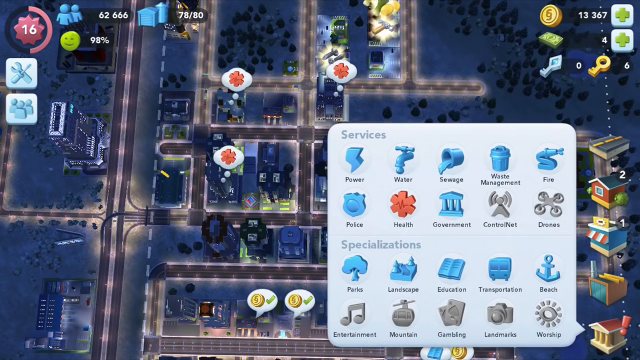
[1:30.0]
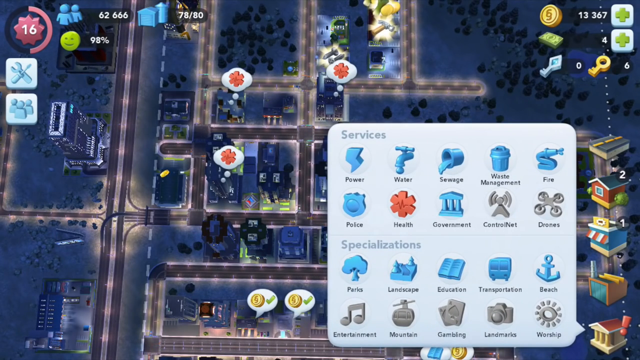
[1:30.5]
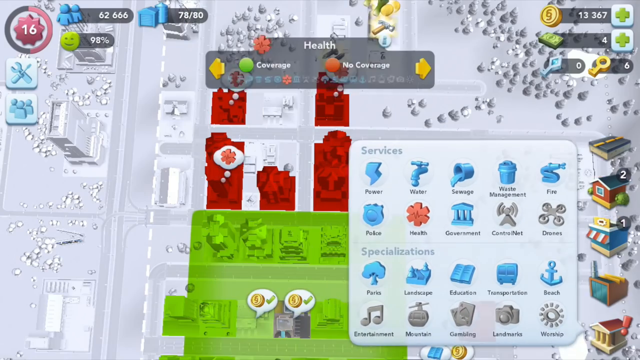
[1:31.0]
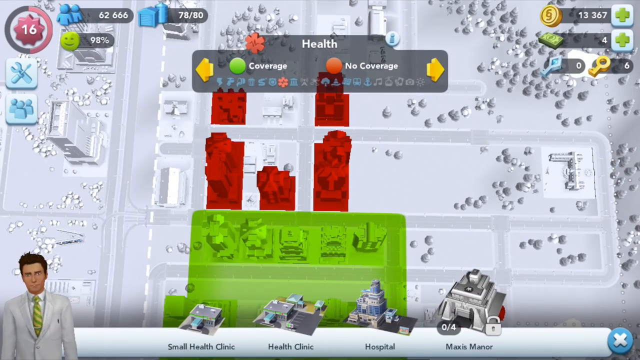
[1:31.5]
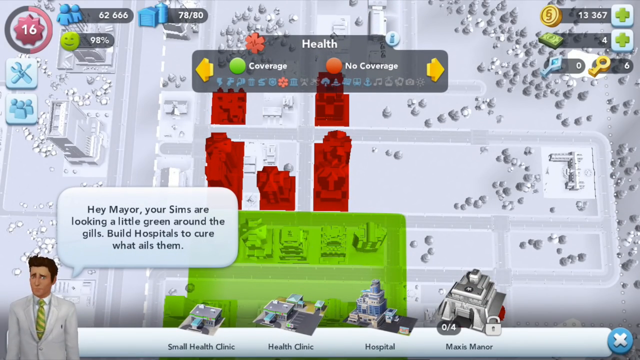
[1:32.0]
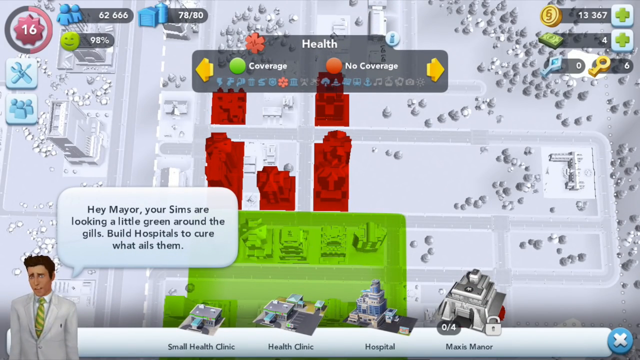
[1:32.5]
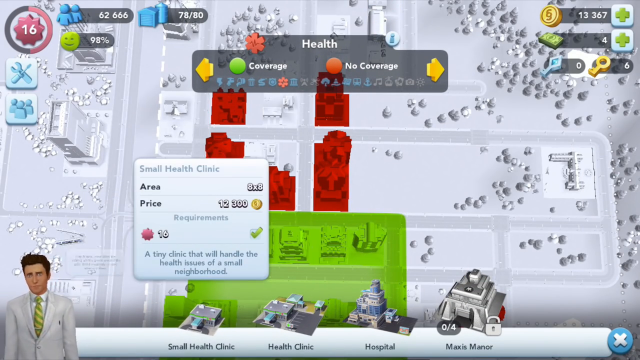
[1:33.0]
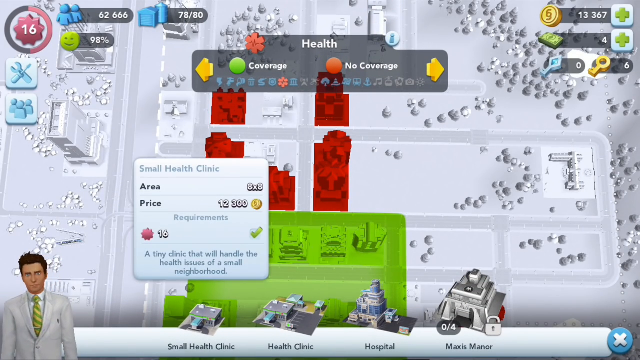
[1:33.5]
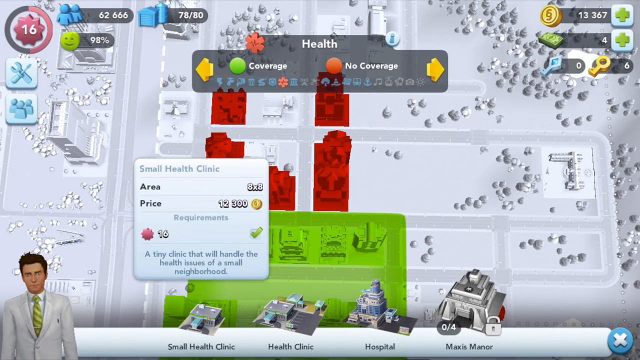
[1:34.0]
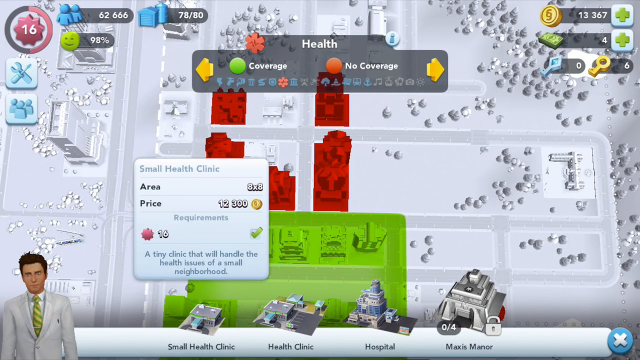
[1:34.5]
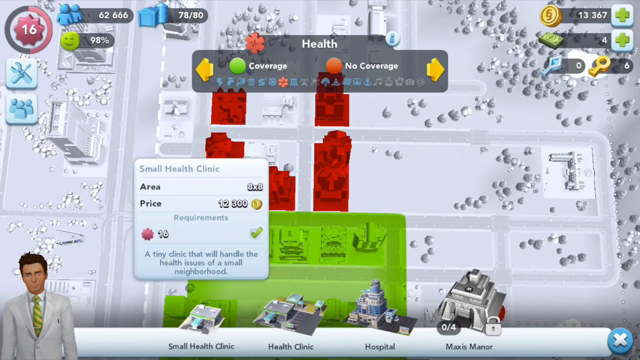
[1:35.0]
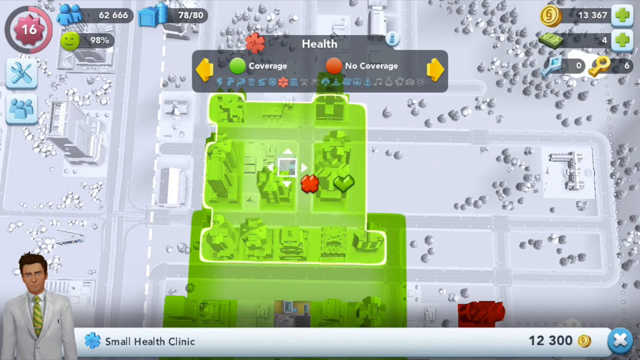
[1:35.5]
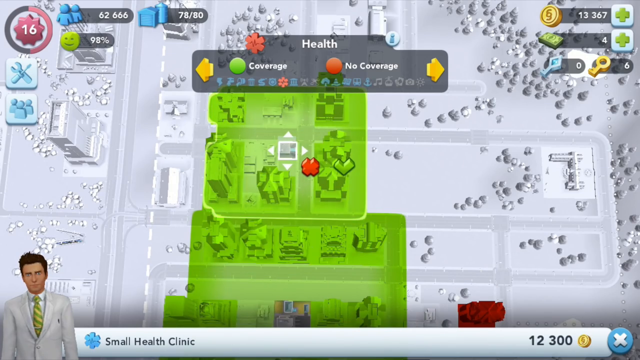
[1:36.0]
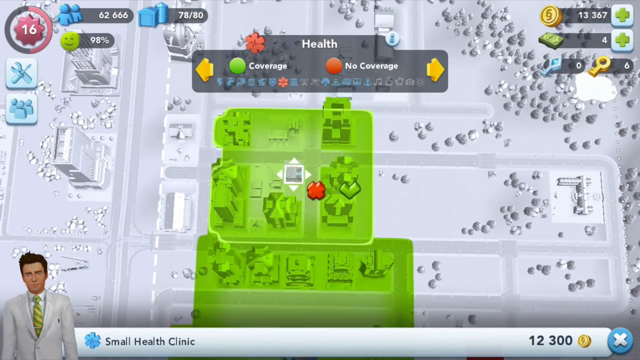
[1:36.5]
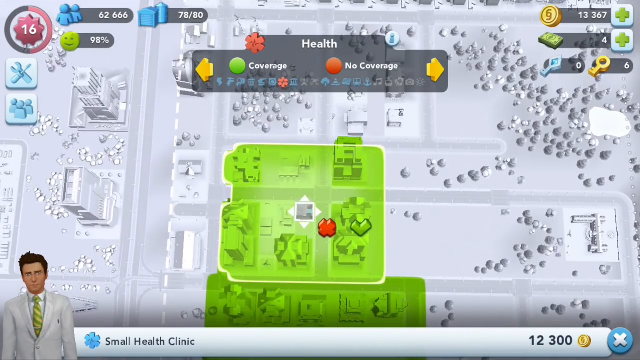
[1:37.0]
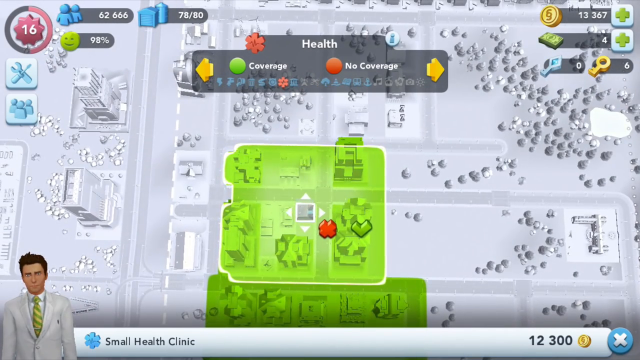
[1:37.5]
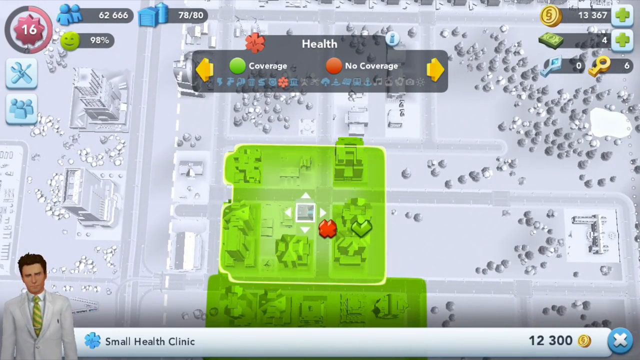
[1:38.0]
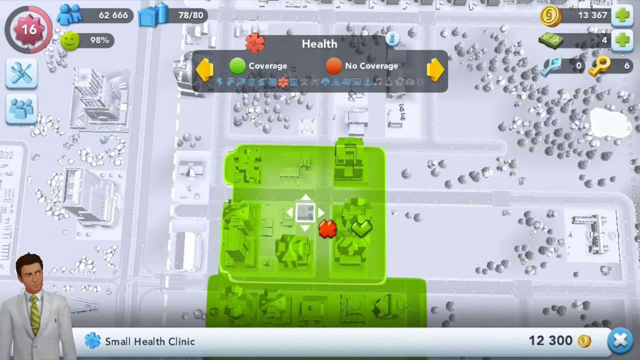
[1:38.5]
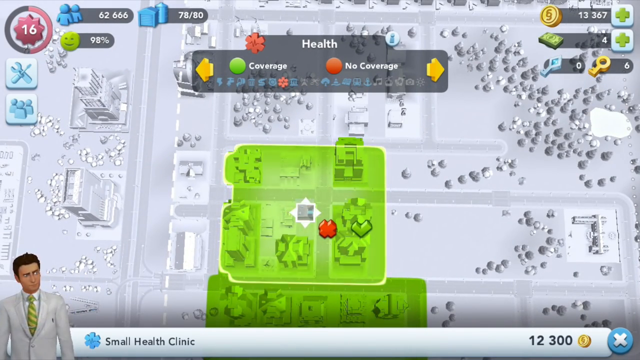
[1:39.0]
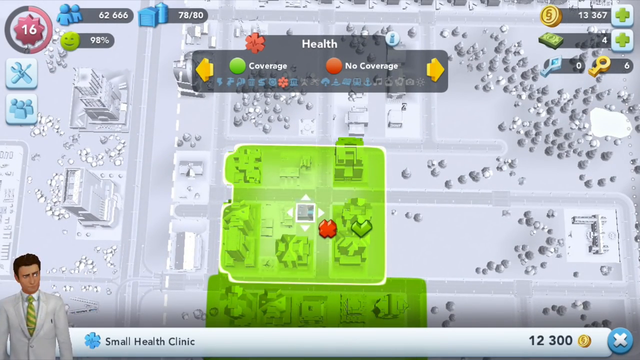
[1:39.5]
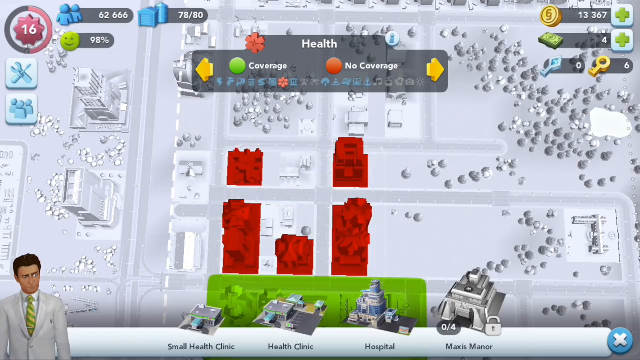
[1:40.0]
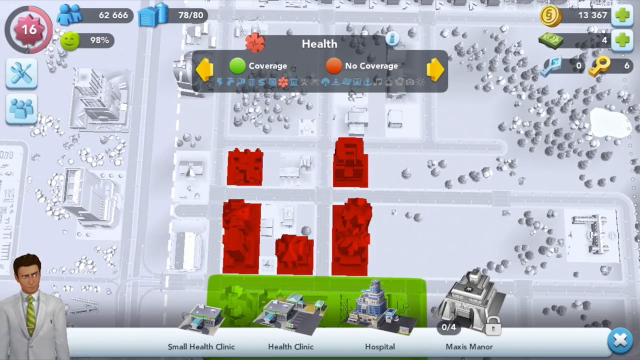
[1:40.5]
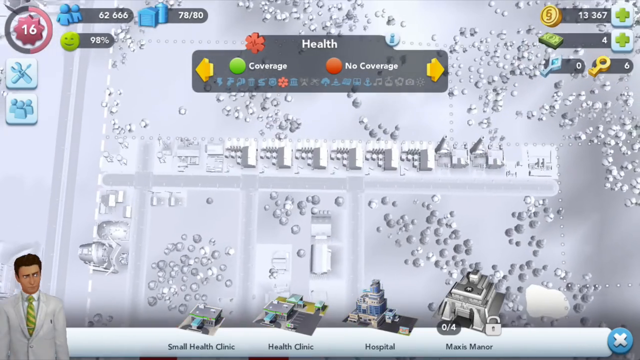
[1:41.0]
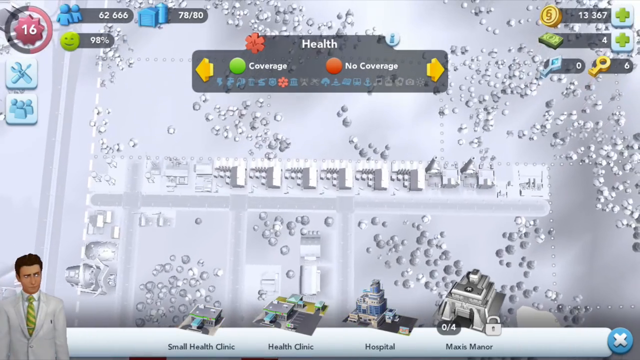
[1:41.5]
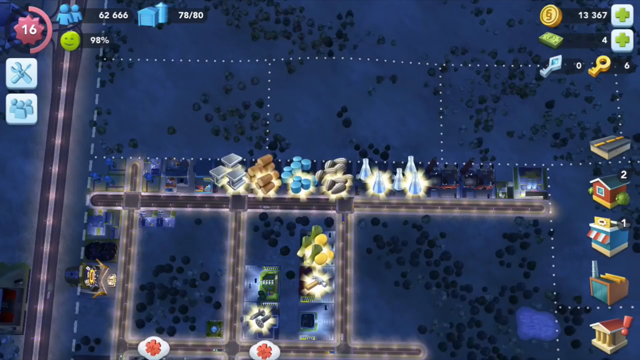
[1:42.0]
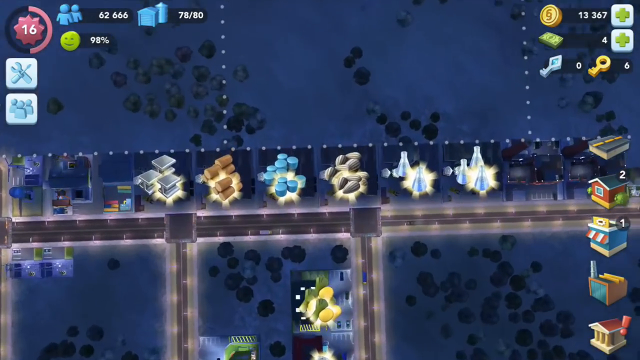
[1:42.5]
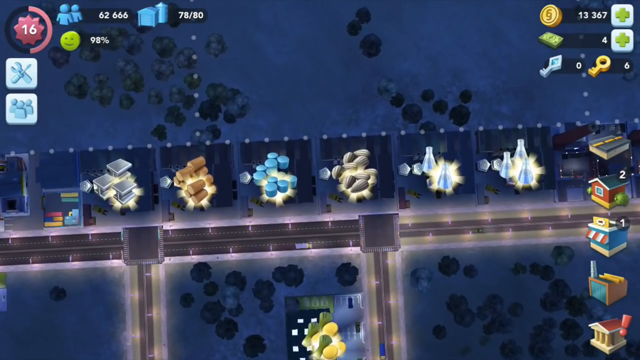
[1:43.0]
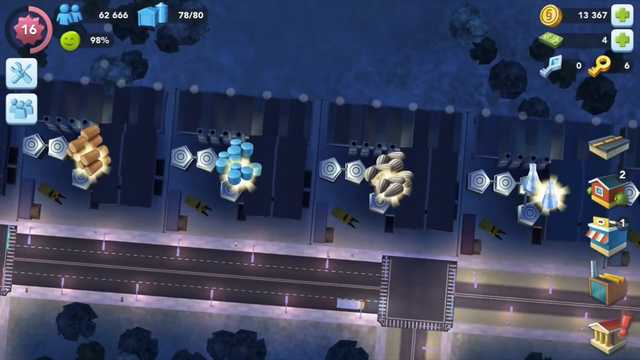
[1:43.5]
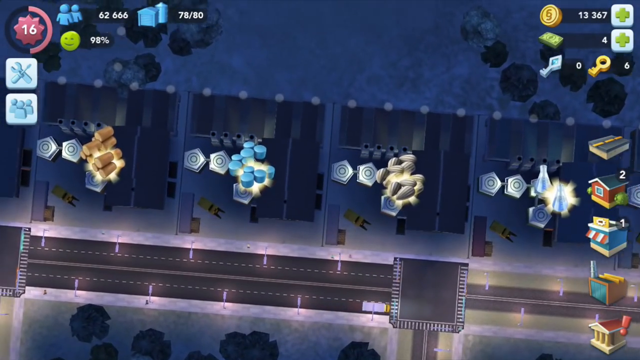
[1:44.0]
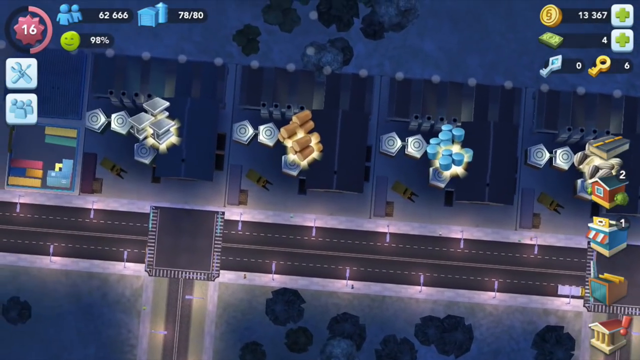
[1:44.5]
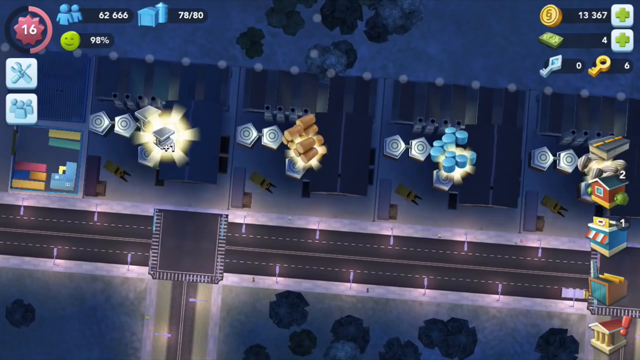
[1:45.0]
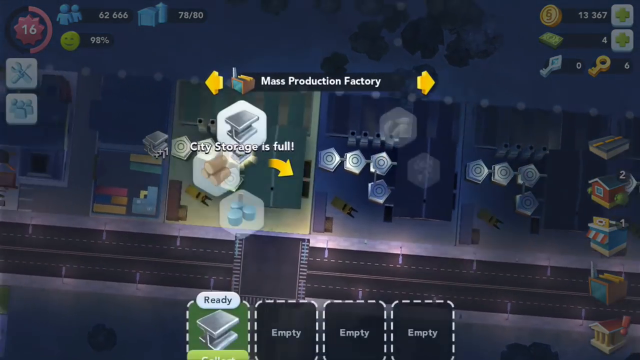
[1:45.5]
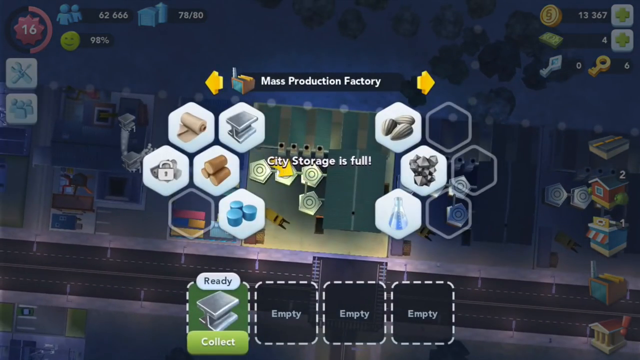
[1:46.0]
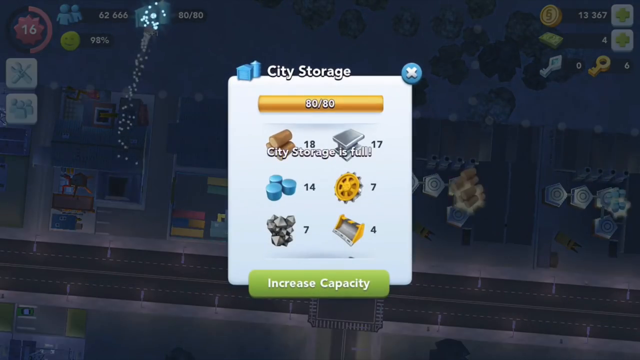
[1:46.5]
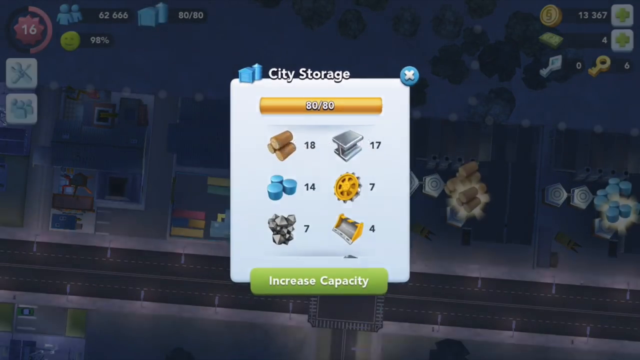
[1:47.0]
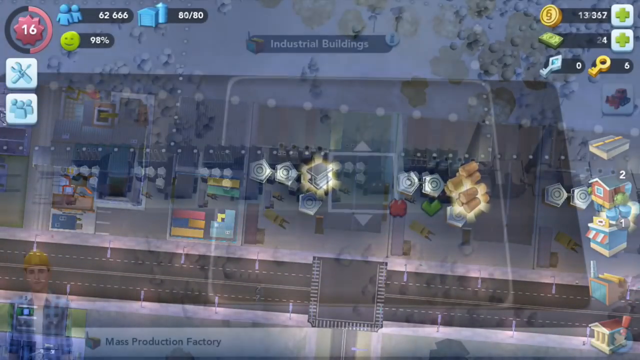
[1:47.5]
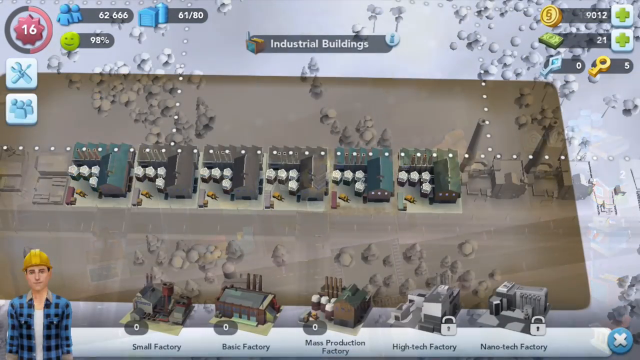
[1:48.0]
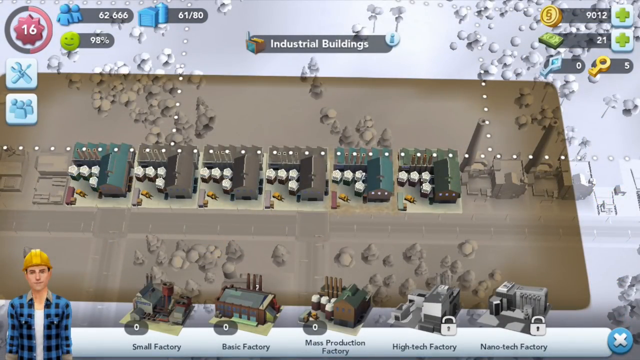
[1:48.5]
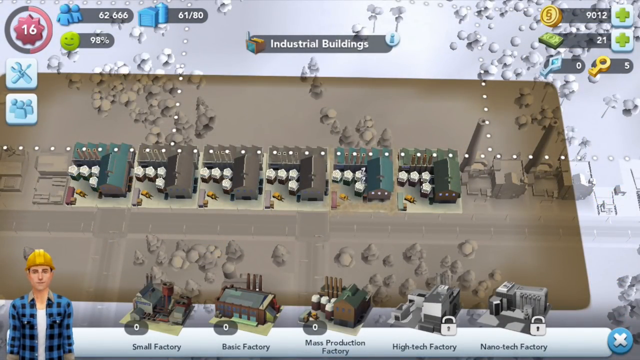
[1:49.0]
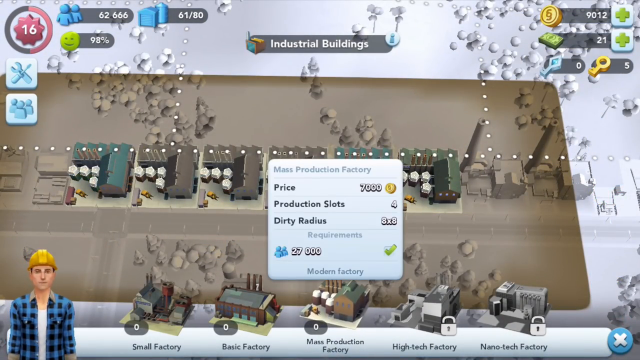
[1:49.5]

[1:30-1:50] The city is shown in a nighttime setting from the overhead view, with the icons still on screen. A window labeled "services" is open, with selections such as power, water, sewage, waste management, fire, police, health, government, and a few others, possibly including drones. A specializations area also has some selections. The view pans out to the main section of the game with health highlighted, and a doctor character, a male, appears in the bottom left-hand corner. An arrow moves over and highlights a green patch of land, with other arrows pointing in each direction; it looks like a section of land possibly to be worked on. The camera then highlights the resources seen earlier and clicks on one of them, and they go to the upper part of the screen. Then it clicks off.